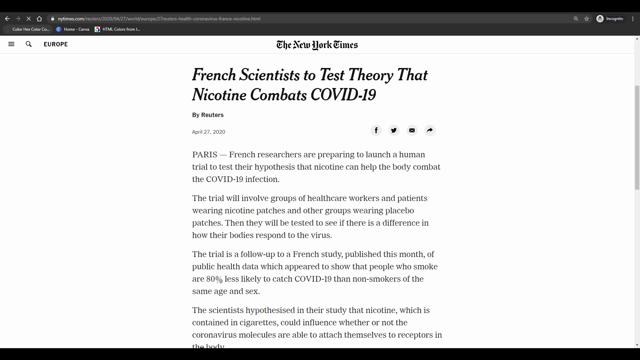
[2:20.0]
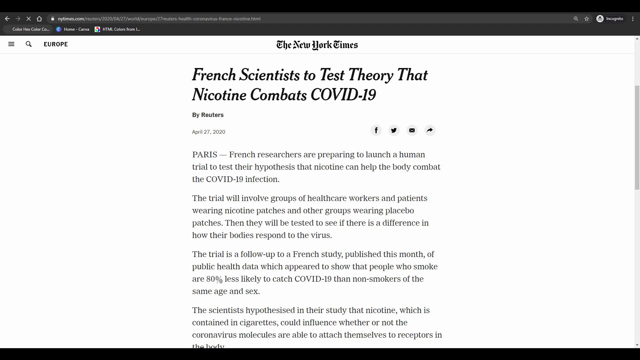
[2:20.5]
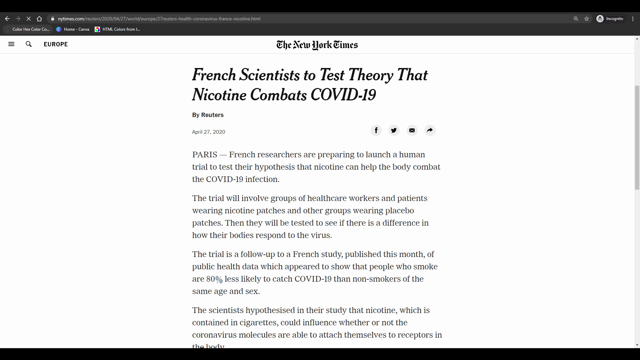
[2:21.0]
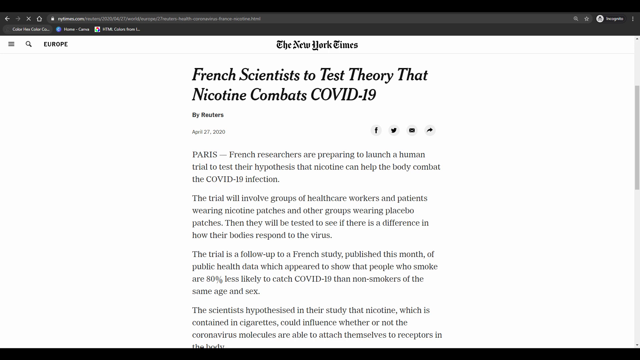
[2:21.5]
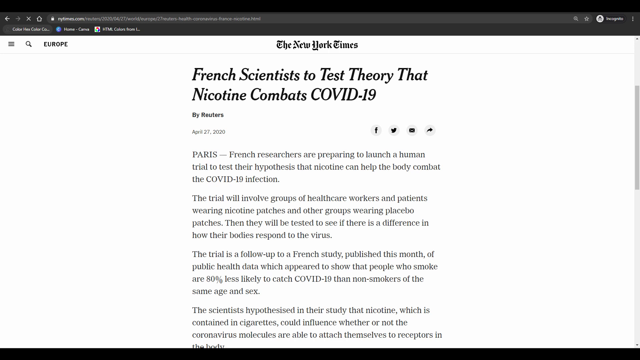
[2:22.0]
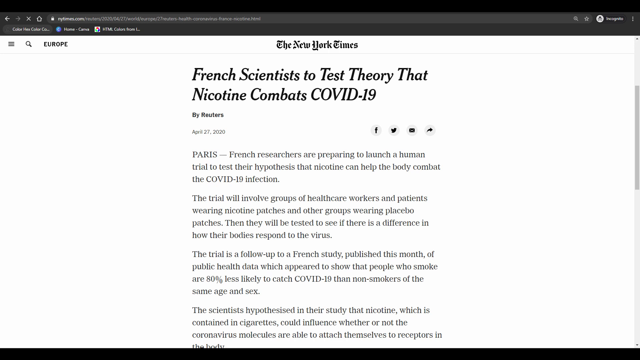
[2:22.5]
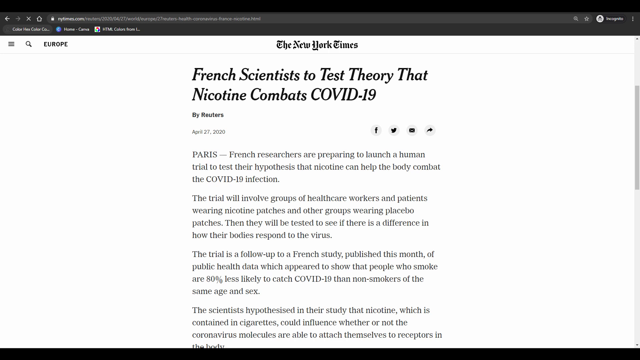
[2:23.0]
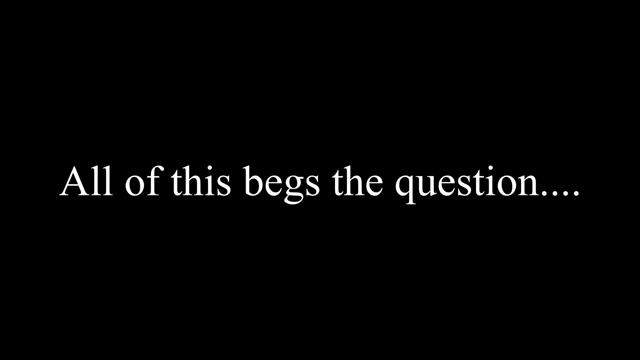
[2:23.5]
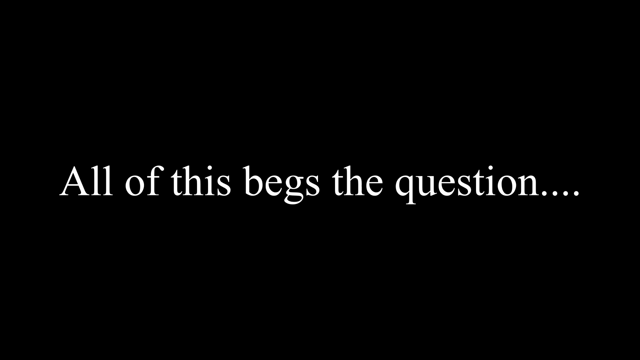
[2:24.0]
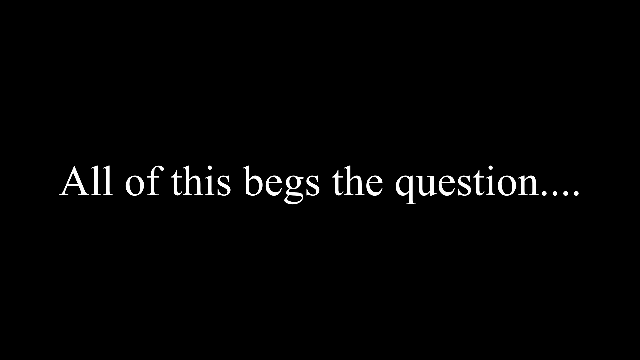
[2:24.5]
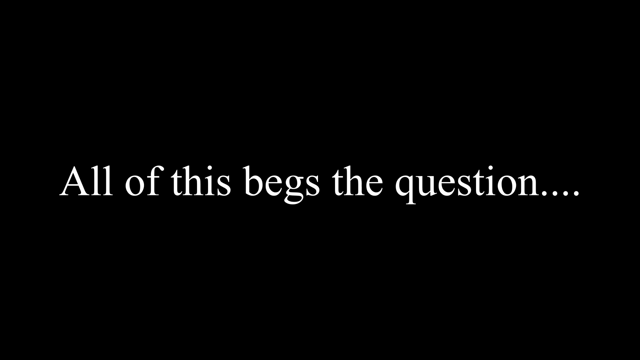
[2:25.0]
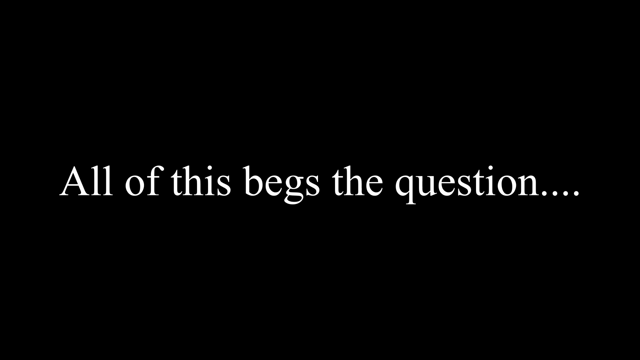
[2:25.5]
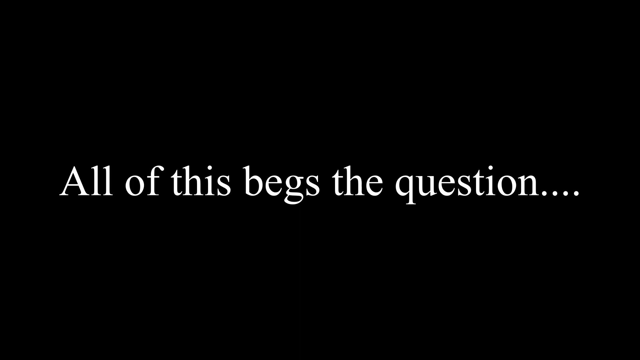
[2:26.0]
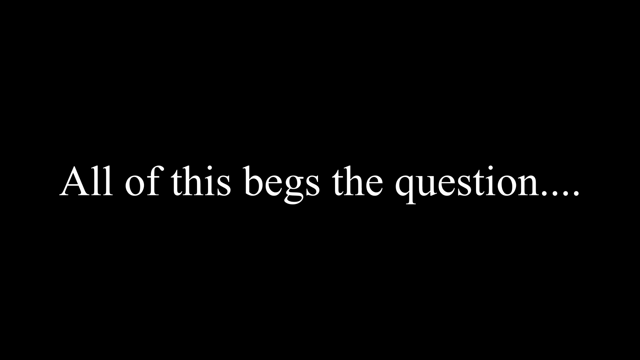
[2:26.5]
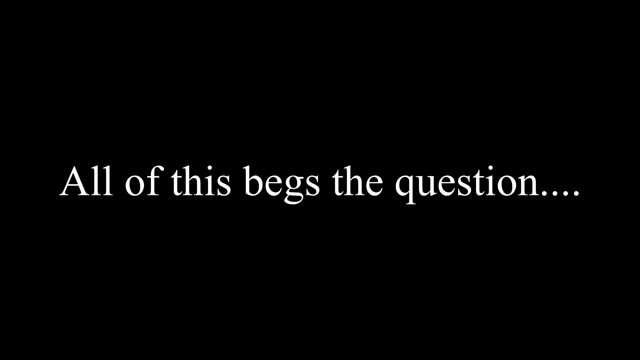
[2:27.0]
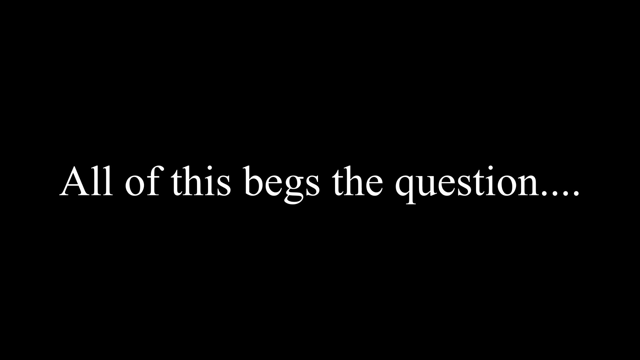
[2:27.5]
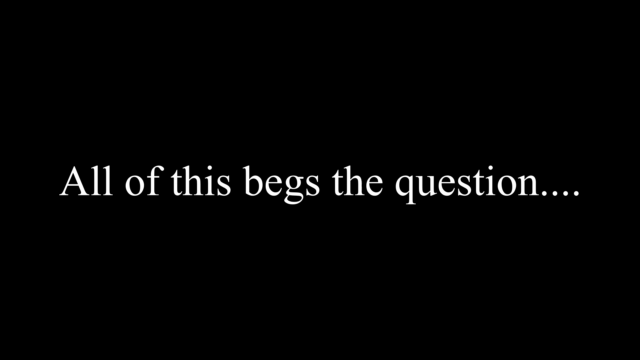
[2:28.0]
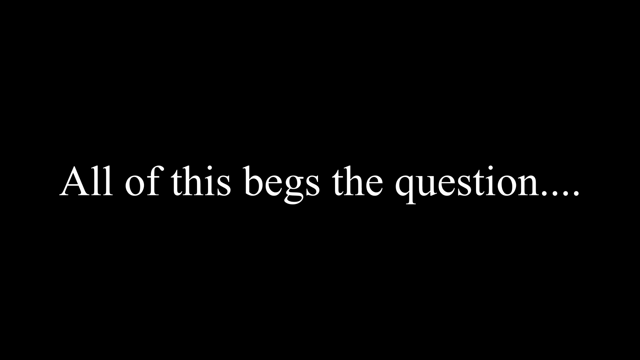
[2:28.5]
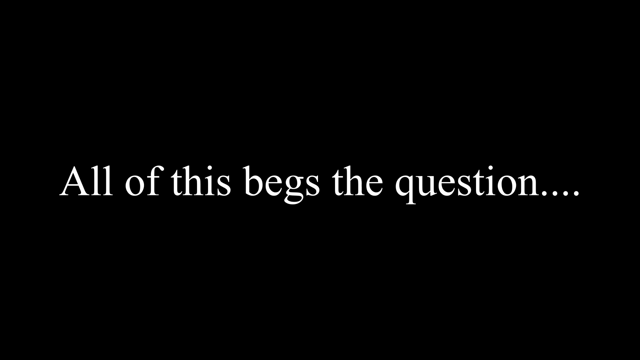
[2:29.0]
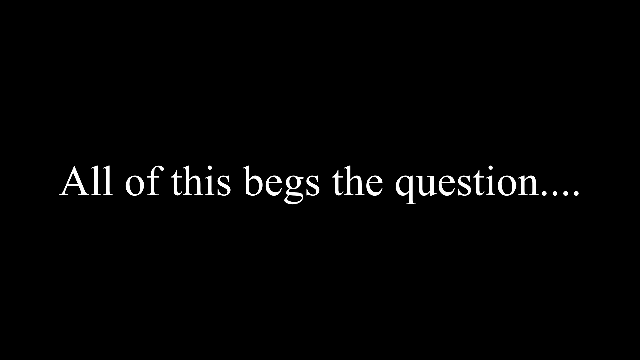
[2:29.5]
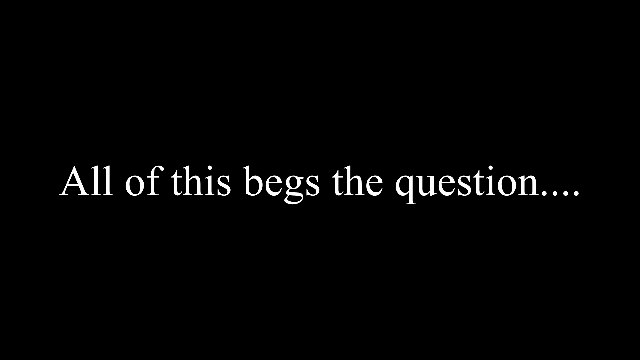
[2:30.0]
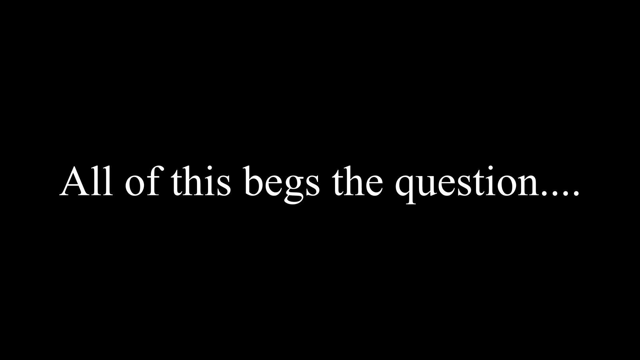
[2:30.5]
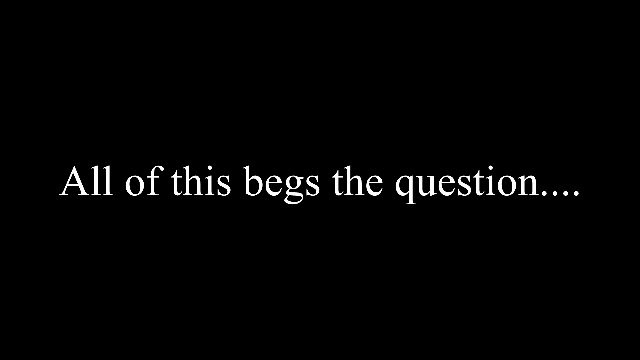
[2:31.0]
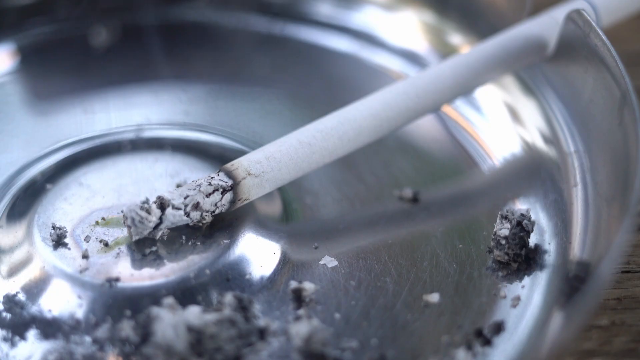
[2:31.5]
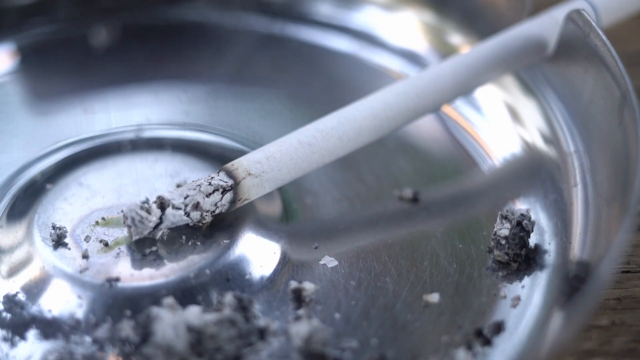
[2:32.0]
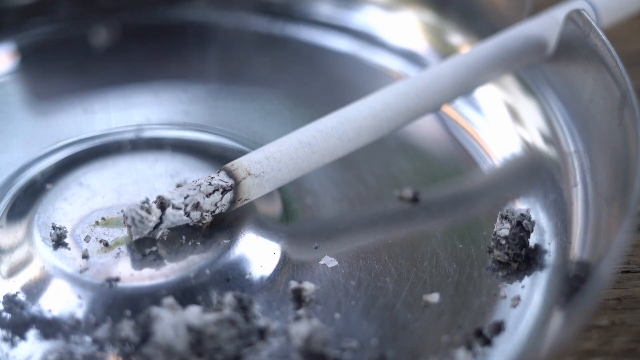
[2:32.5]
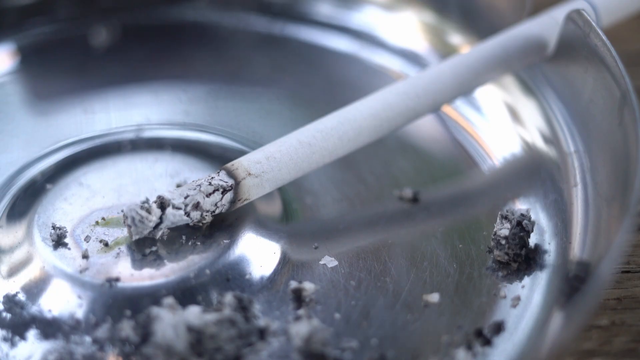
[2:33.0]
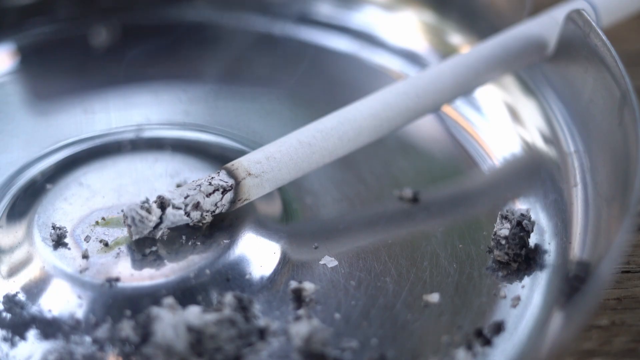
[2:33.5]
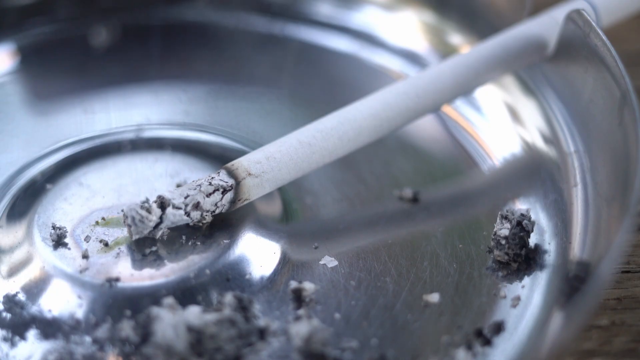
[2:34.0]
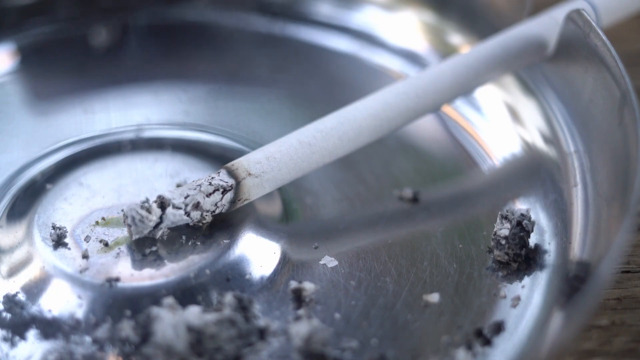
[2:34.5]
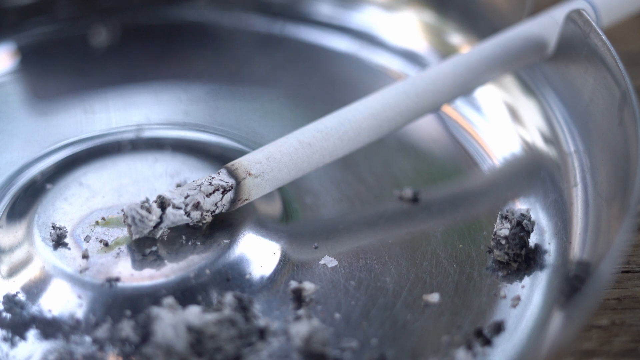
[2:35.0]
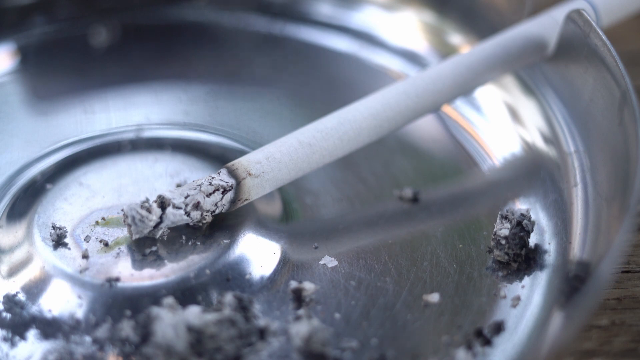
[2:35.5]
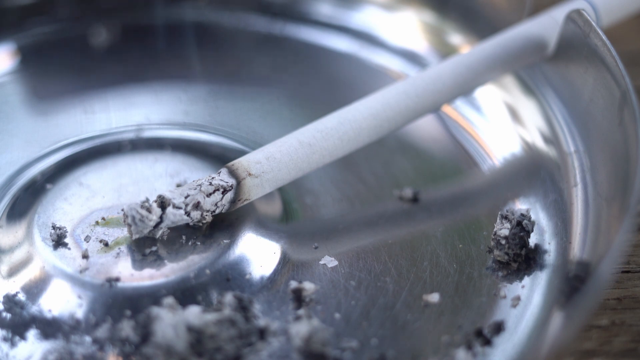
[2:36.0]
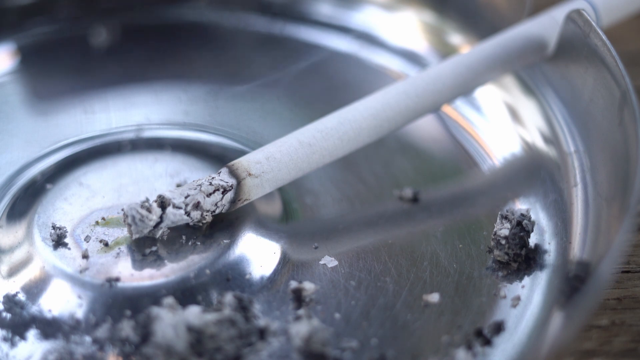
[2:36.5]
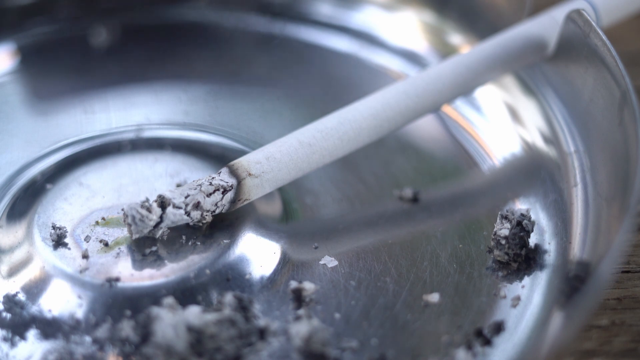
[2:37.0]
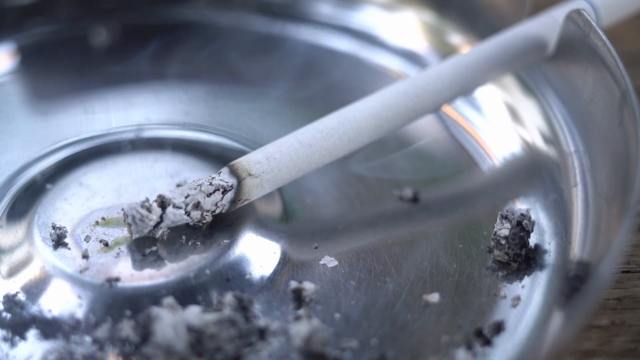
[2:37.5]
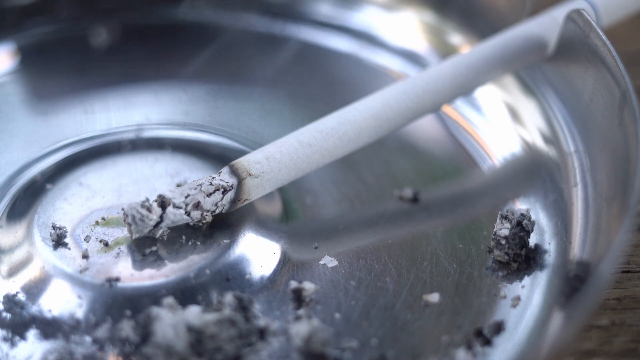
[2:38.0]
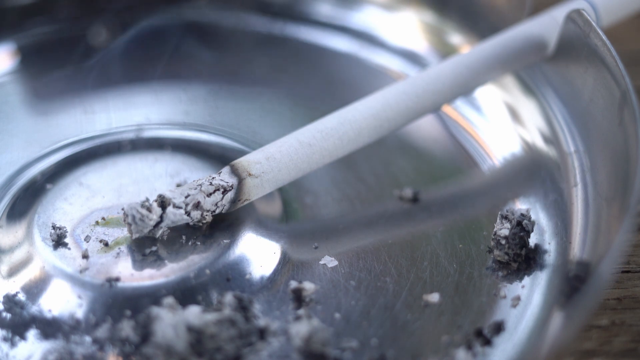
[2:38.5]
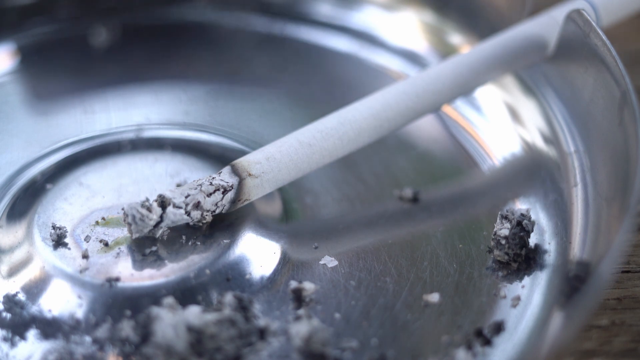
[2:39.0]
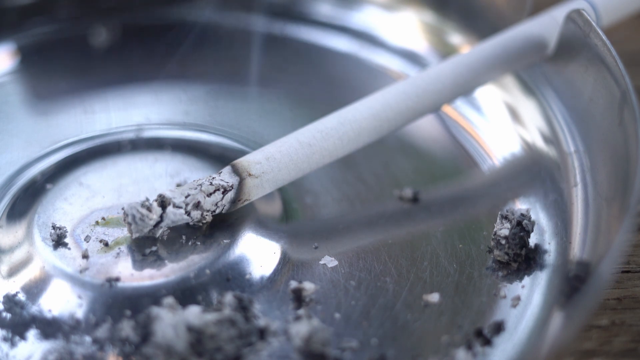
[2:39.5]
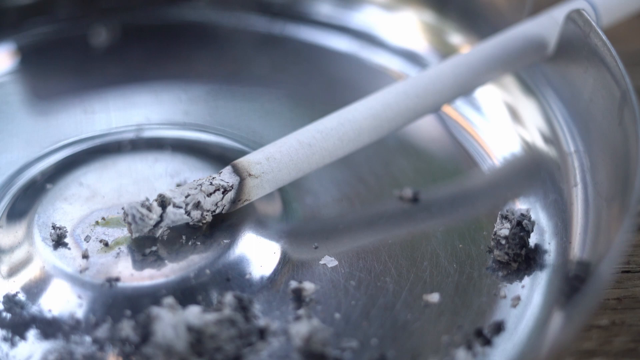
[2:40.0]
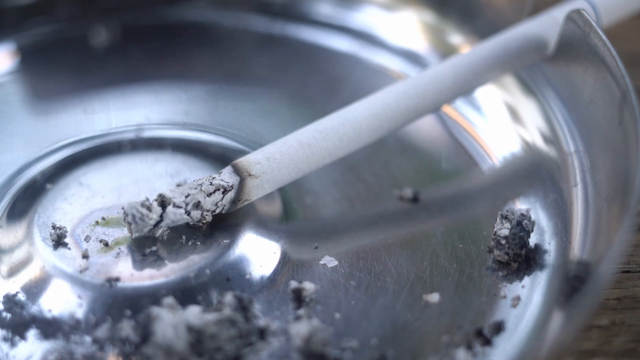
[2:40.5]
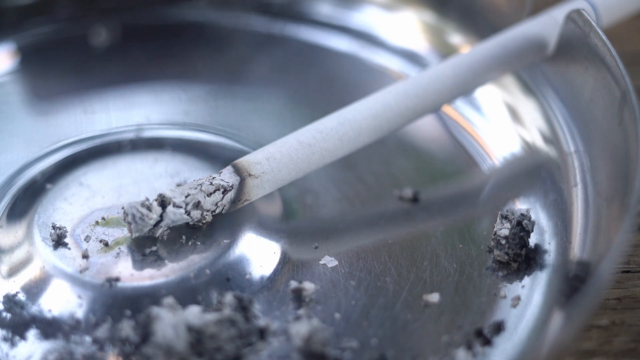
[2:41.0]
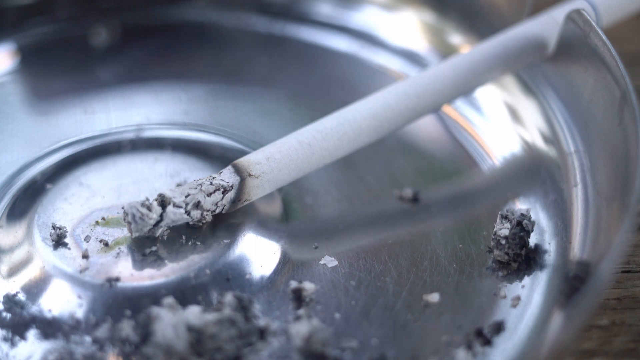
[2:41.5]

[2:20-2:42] A copy of the New York Times article headlined "French scientists to test theory that nicotine combats COVID-19" is shown on a webpage. The credit is to Reuters, the article is dated April 27, 2020, and various social media icons are on the right. Below that are three and a half paragraphs of the article itself, with a Paris dateline. The scene changes to a black screen with the phrase "all of this begs the question..." in white lettering, which stays on the screen for several seconds. A lit white cigarette then appears, resting in a metal ashtray. Apart from a little bit of ash from the cigarette on the right-hand side, the ashtray holds nothing else. The ash slowly burns down the cigarette, and smoke comes off it.